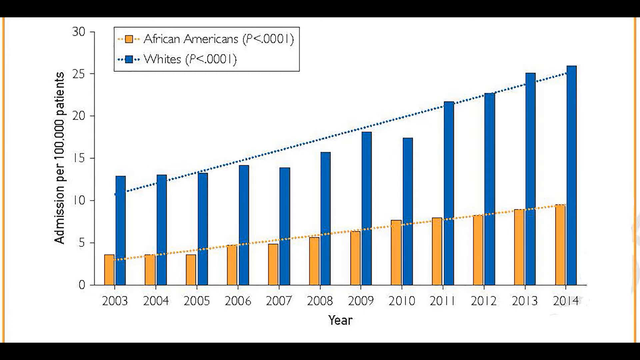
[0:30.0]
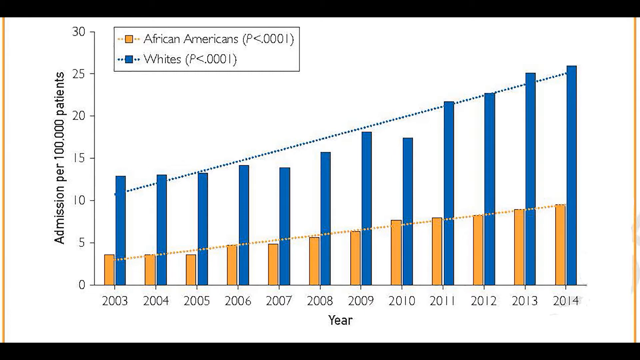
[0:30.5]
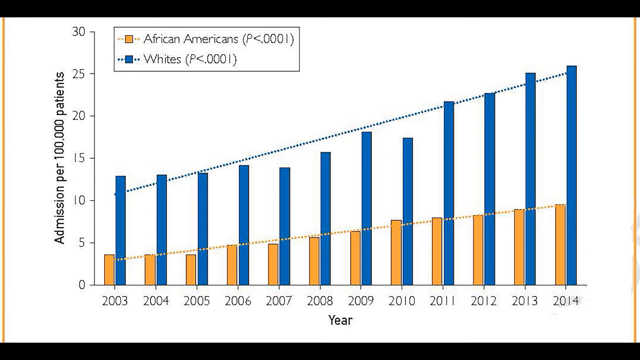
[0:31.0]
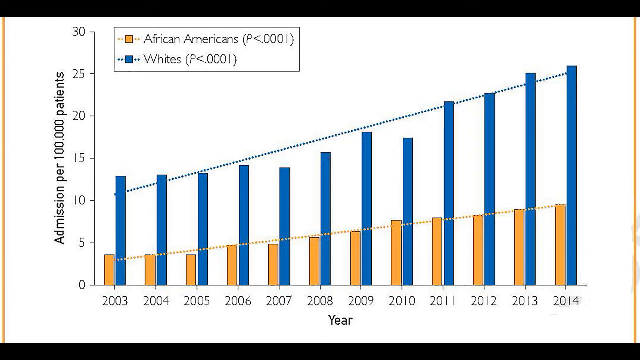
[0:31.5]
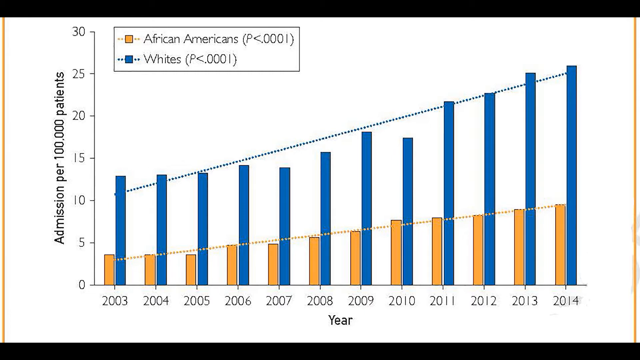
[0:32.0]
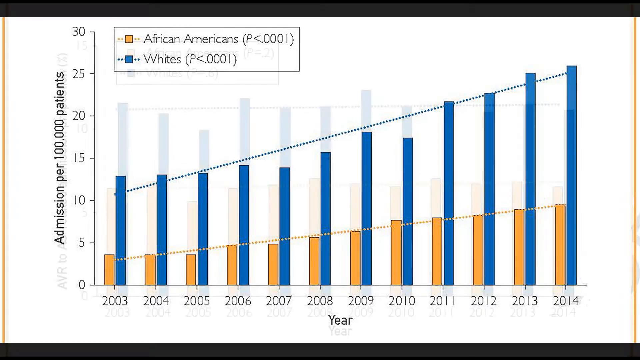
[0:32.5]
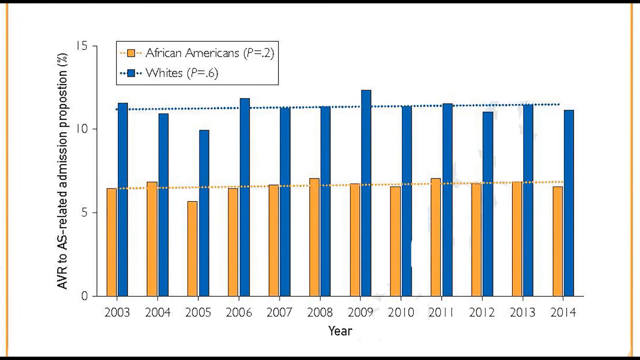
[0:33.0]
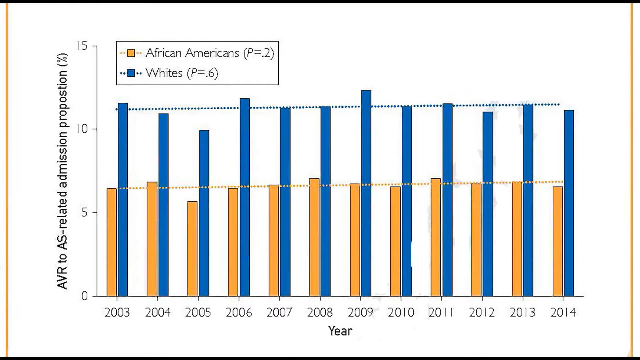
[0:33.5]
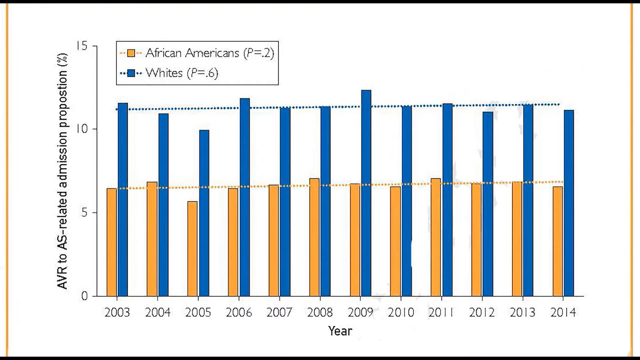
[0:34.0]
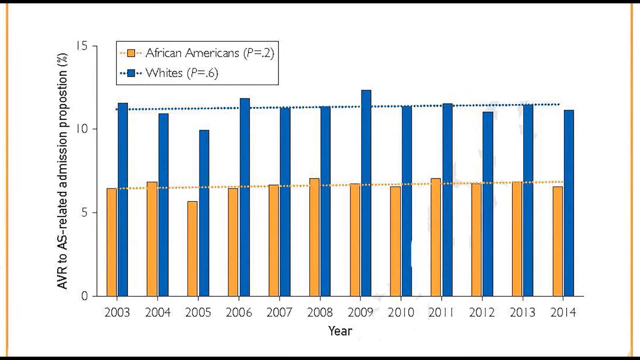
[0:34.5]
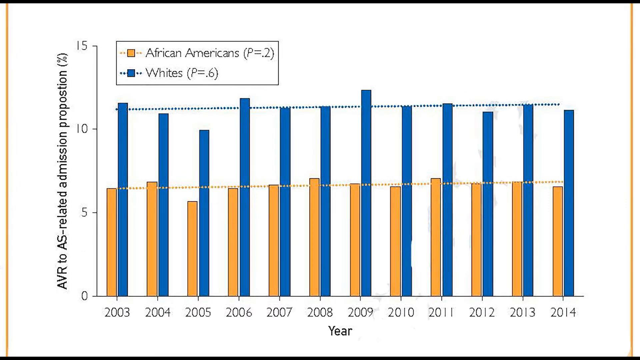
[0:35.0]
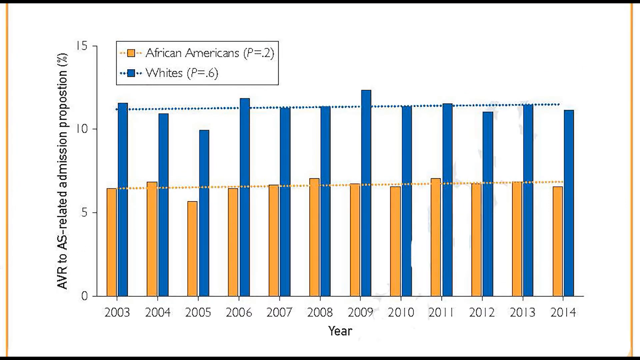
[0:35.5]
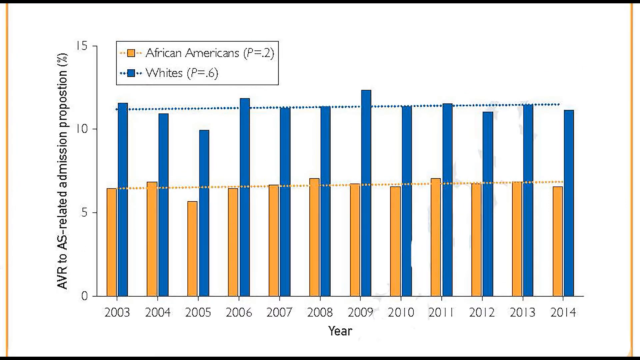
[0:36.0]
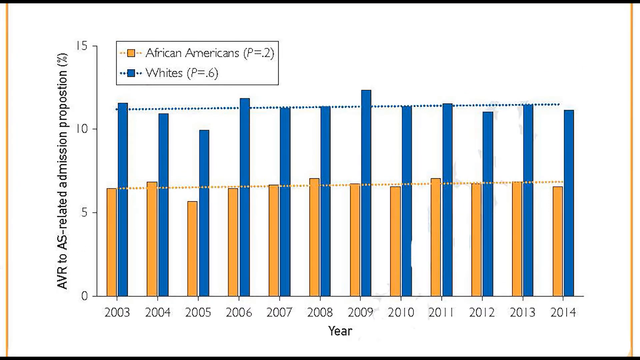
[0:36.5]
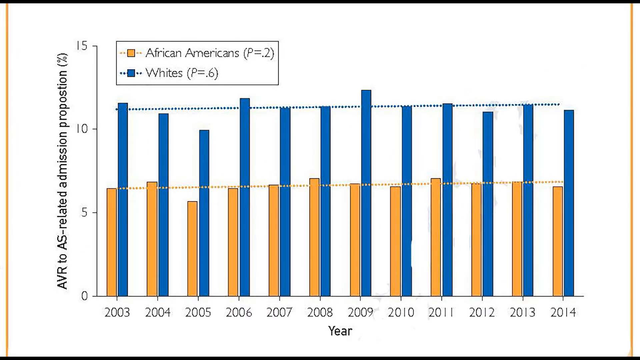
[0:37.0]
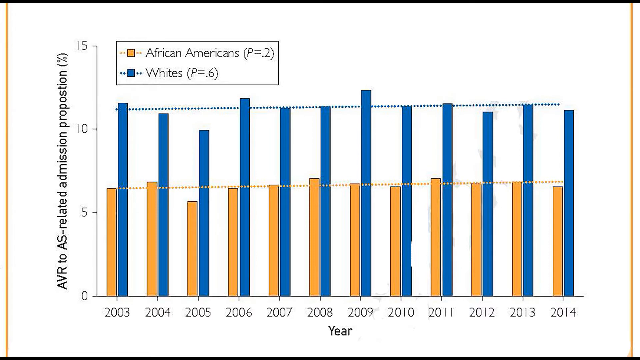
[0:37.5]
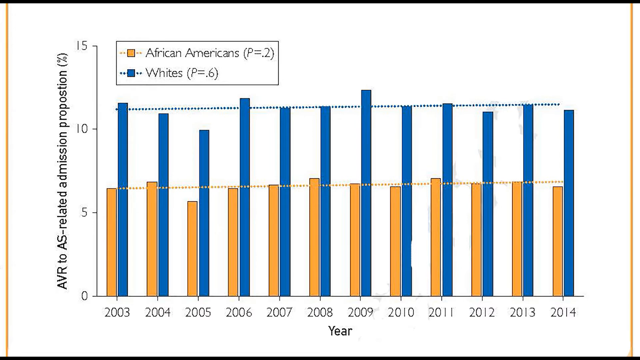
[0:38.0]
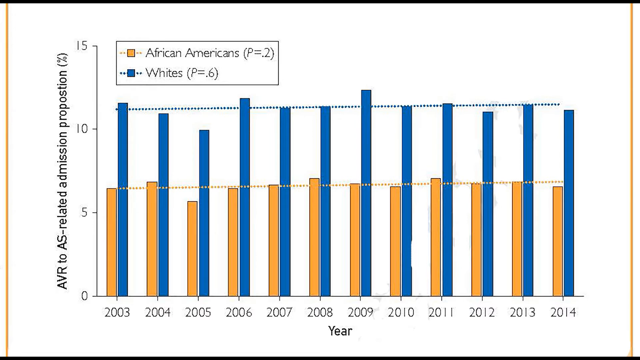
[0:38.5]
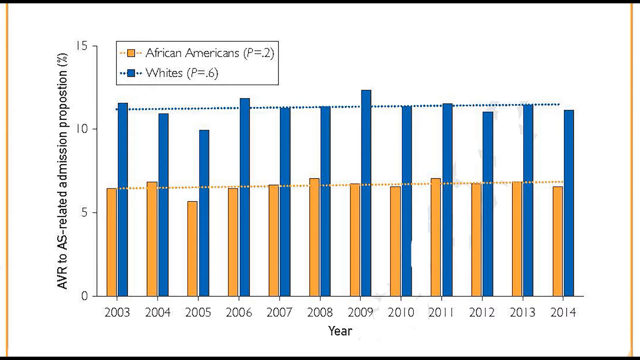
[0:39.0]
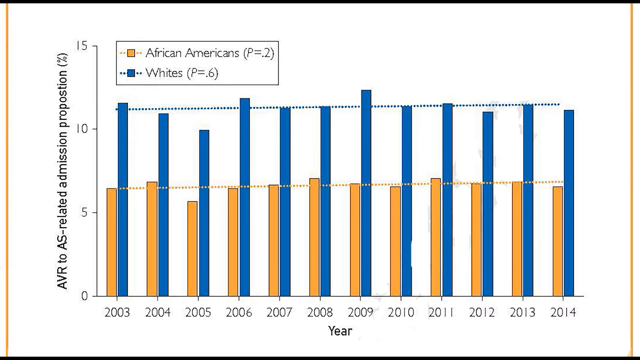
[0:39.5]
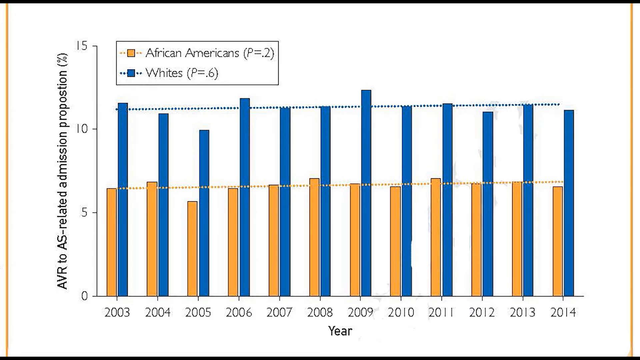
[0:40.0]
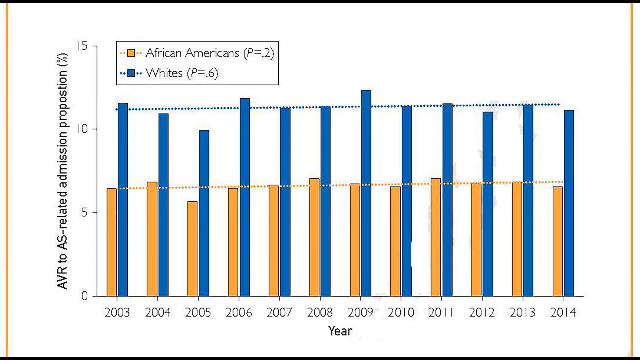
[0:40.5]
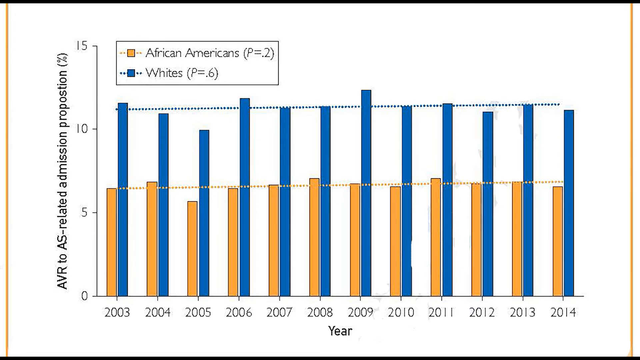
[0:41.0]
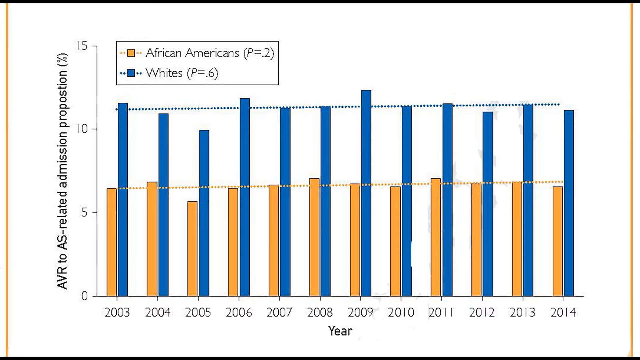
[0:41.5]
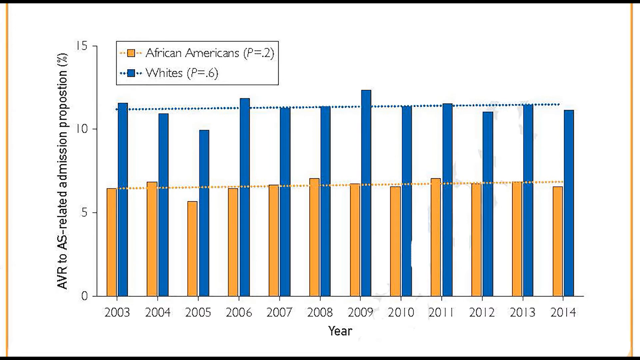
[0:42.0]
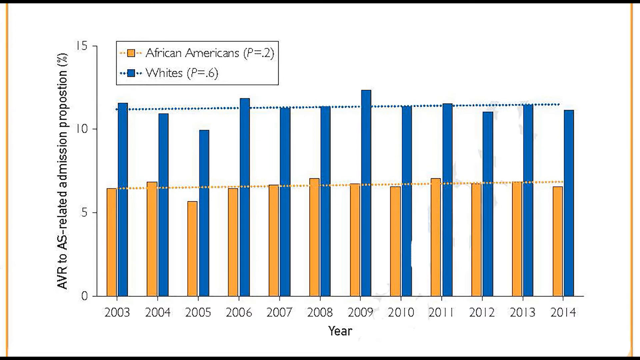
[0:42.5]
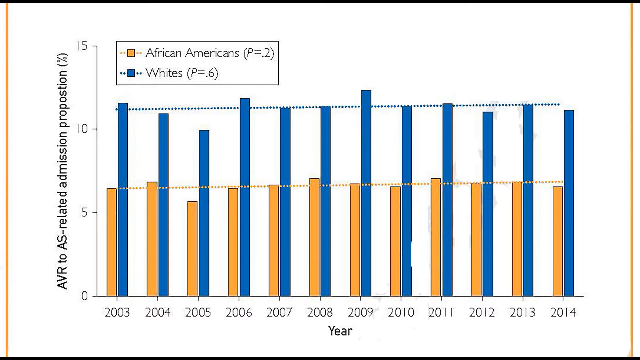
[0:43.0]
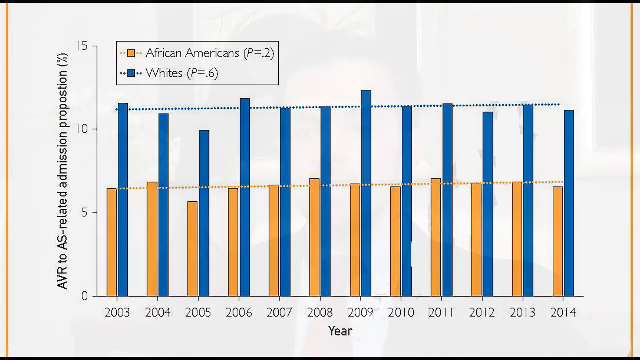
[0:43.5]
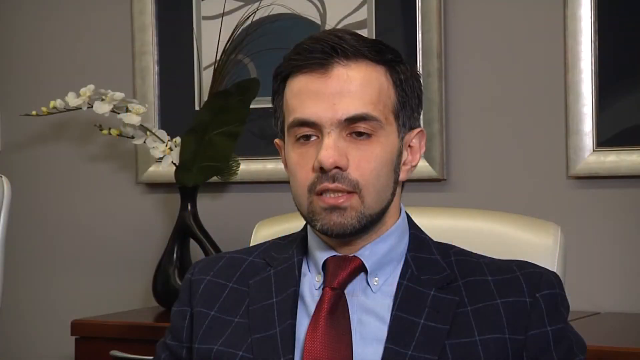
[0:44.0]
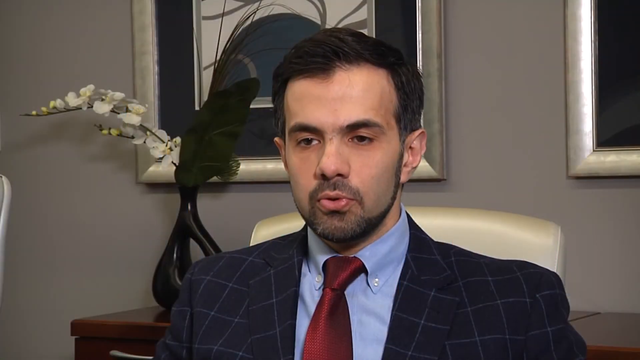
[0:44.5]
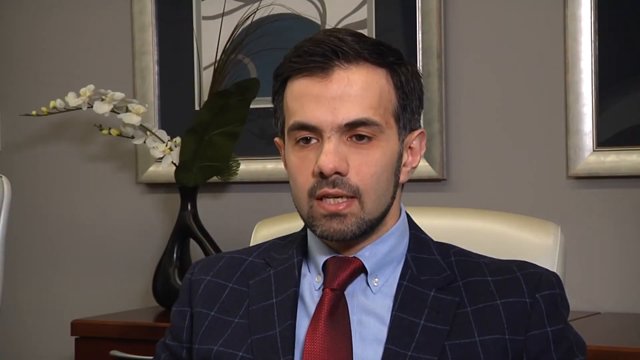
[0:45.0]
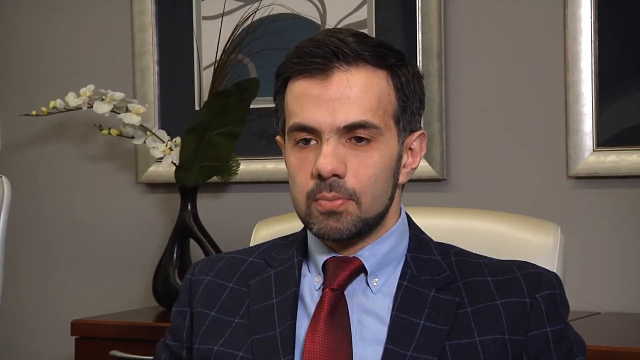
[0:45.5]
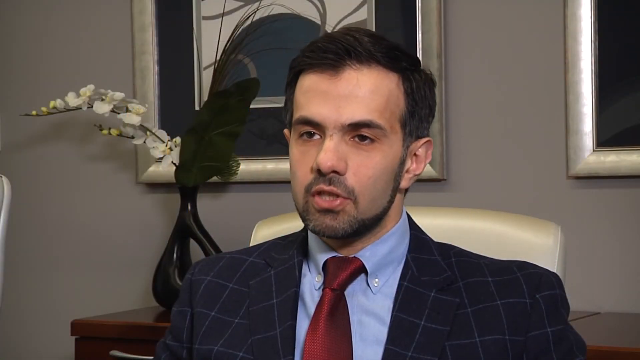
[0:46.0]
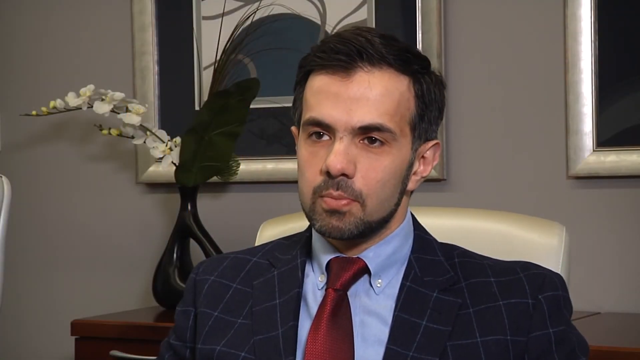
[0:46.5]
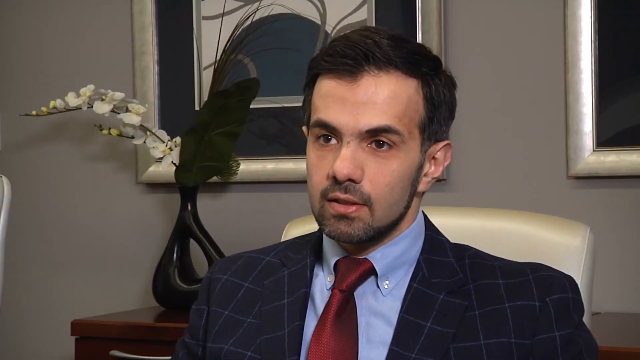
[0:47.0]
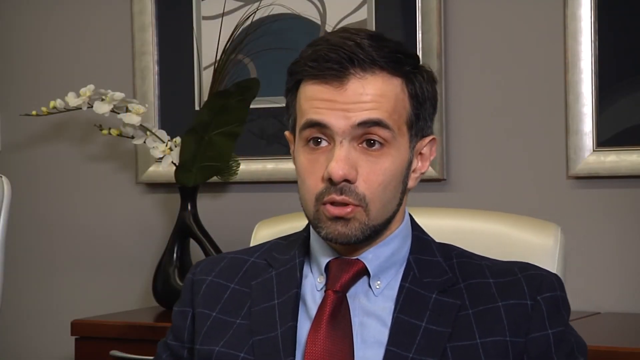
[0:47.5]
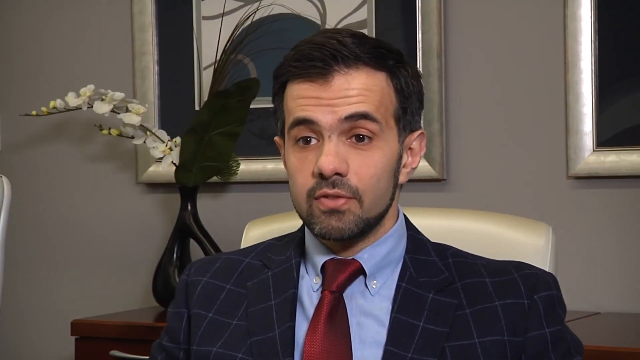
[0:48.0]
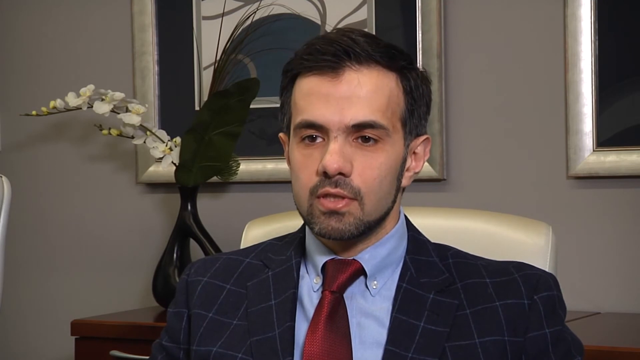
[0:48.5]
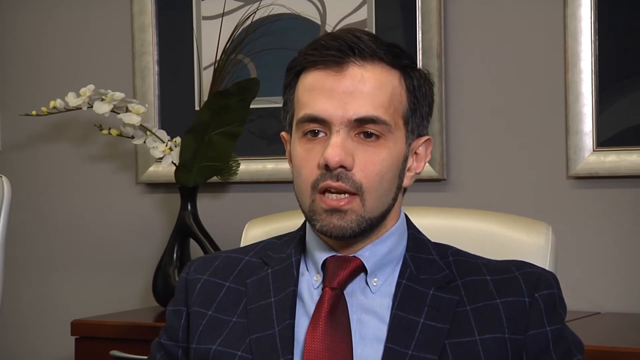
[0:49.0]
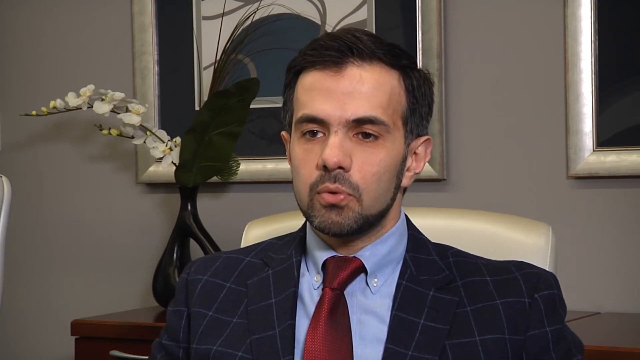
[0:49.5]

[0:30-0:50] A graph is shown. The x-axis is year, running 2003 to 2014, and the y-axis is admissions per 100 thousand patients. It is a bar chart with two series, African Americans in yellow and whites in blue, and a trend line shows a gradual increase in admissions in both sets, with a steeper trend for whites. Another graph follows with the same time series on the x-axis and AVR to AS related admission proposition on the y-axis; the yellow African American series is at about six and whites at about 11. The view then returns to the man talking to camera in a greyish room, and stays on him. He is probably Hispanic, with black hair, a beard turning white, dark eyes, and somewhat tan skin, not very, and he wears a blue suit with check.